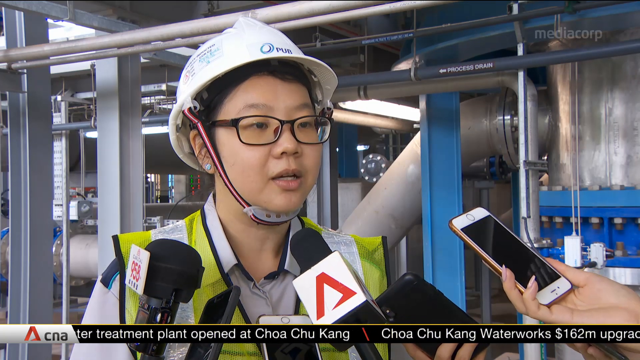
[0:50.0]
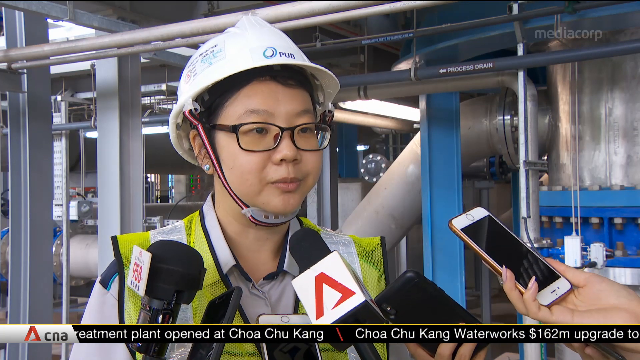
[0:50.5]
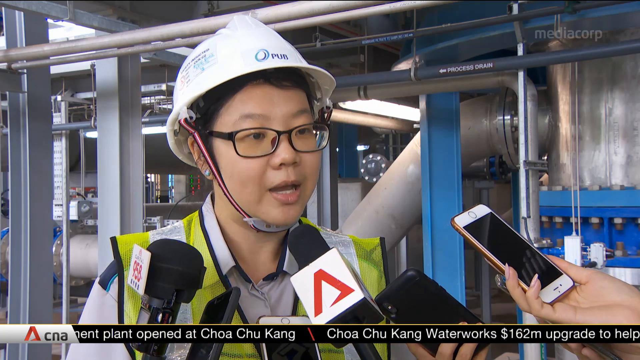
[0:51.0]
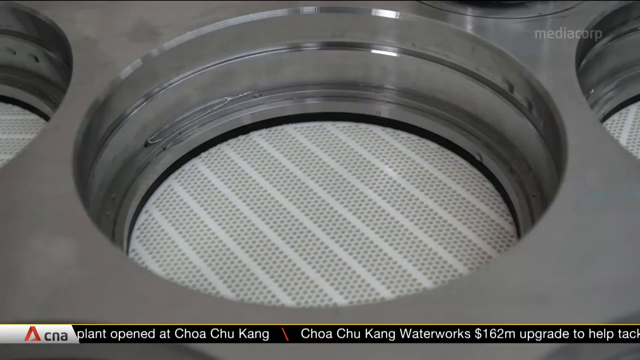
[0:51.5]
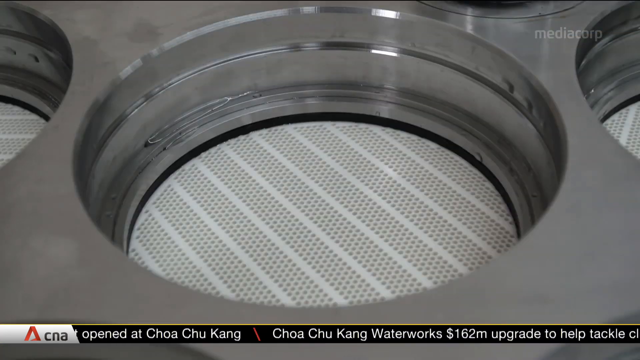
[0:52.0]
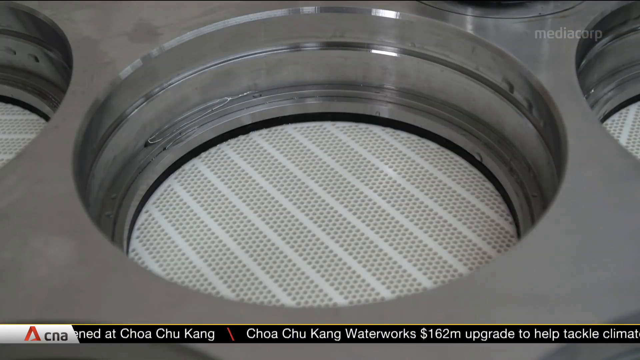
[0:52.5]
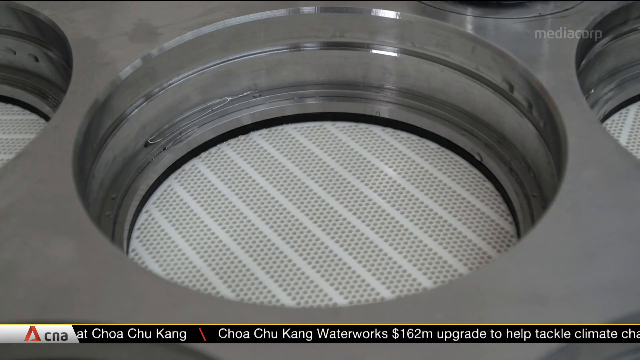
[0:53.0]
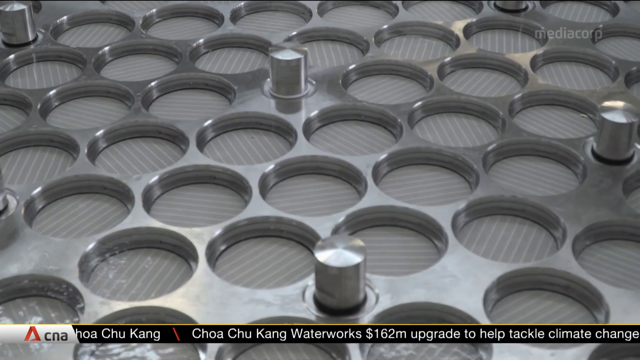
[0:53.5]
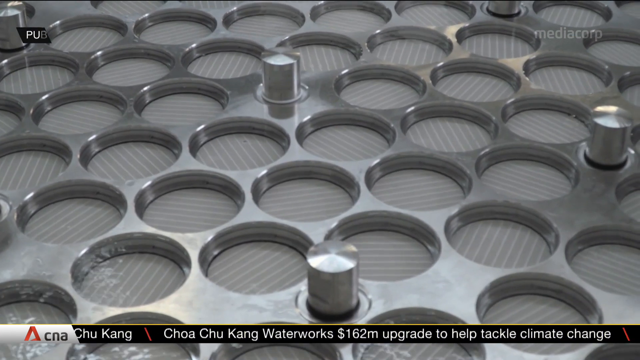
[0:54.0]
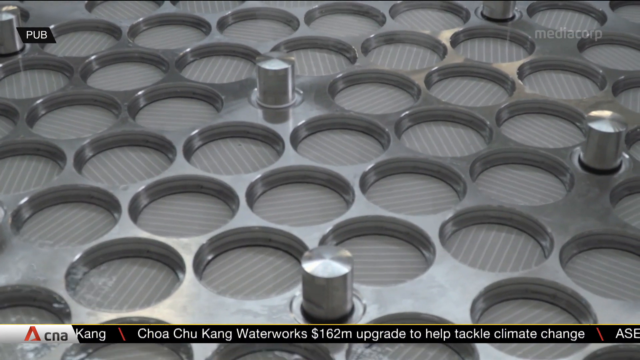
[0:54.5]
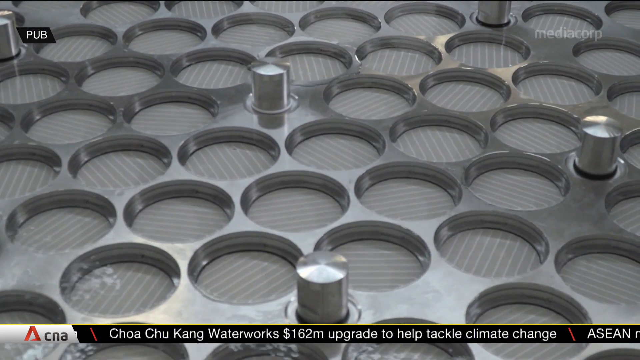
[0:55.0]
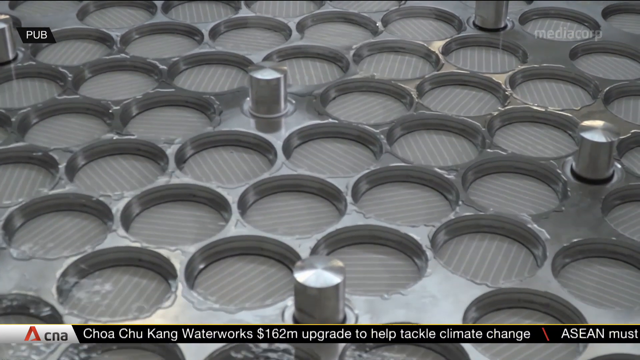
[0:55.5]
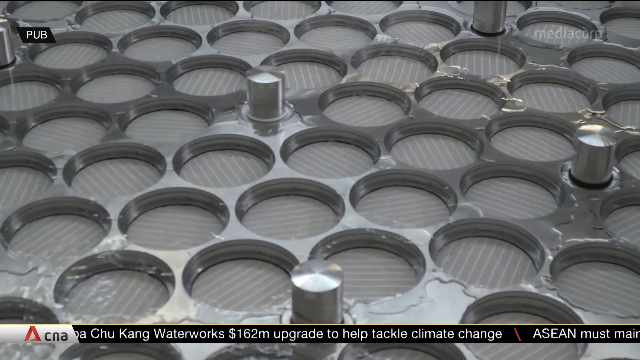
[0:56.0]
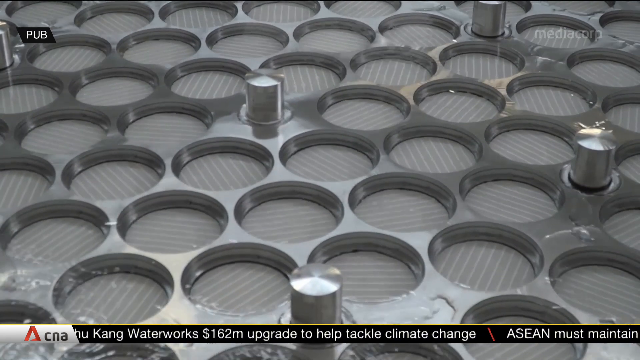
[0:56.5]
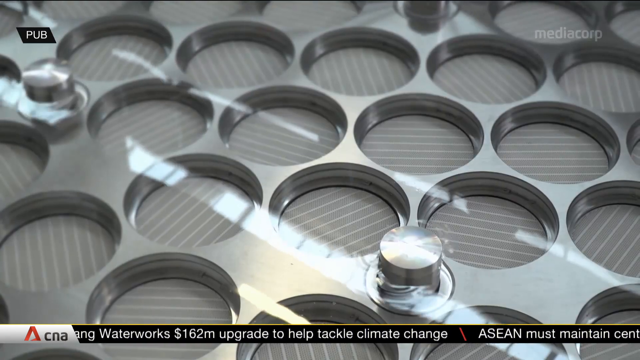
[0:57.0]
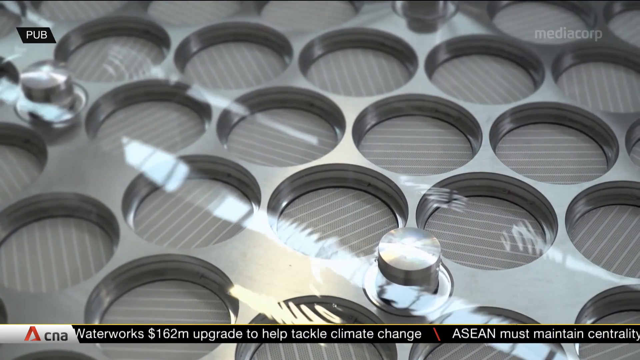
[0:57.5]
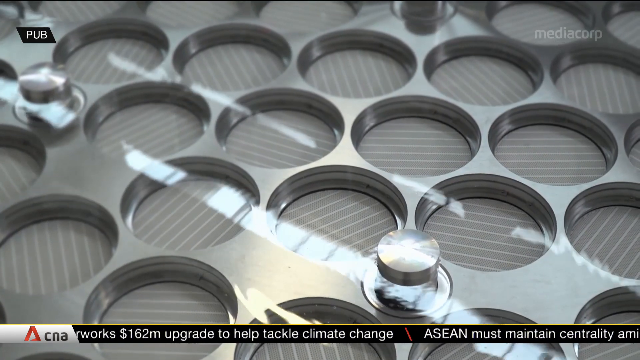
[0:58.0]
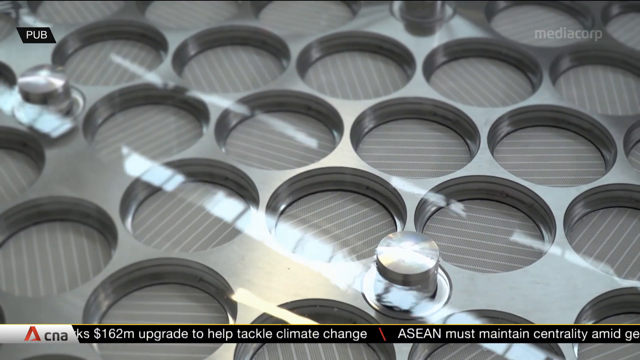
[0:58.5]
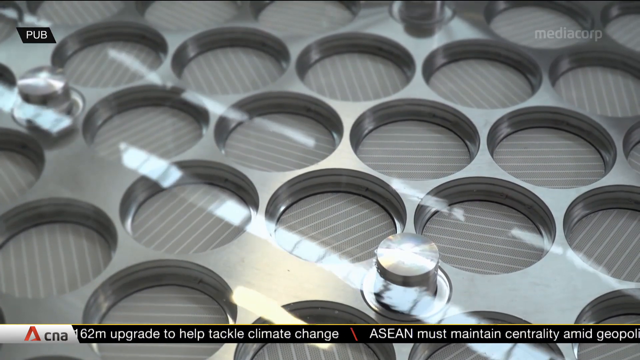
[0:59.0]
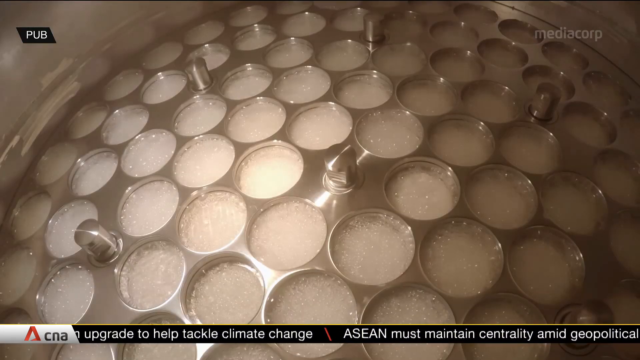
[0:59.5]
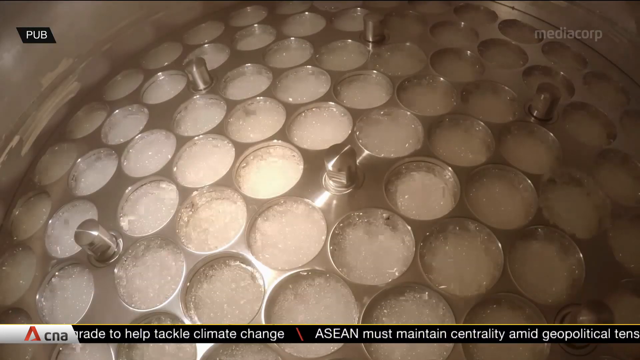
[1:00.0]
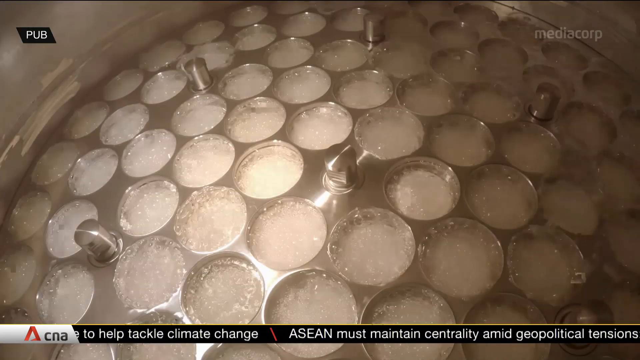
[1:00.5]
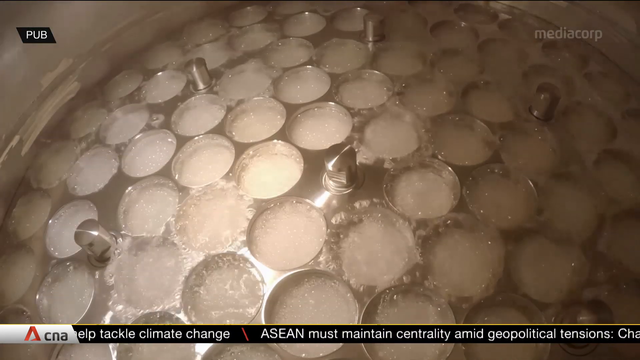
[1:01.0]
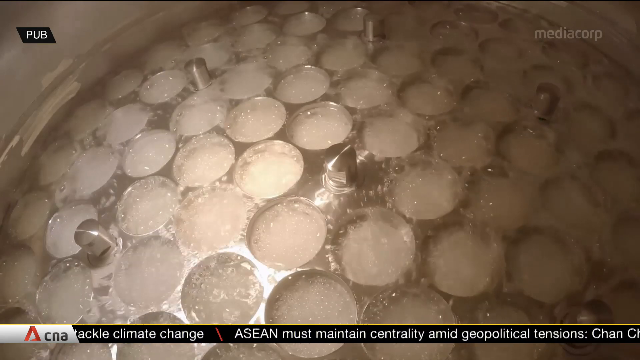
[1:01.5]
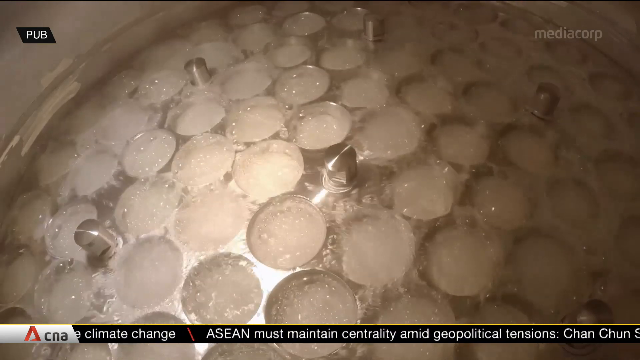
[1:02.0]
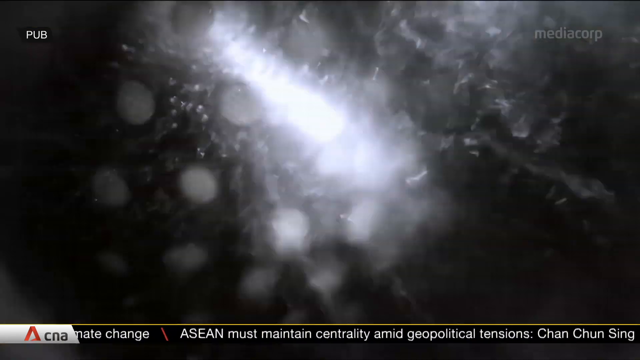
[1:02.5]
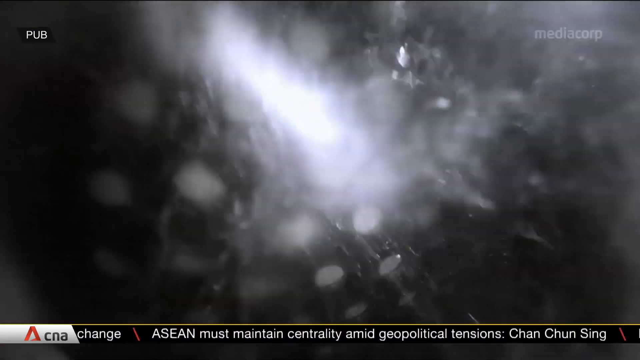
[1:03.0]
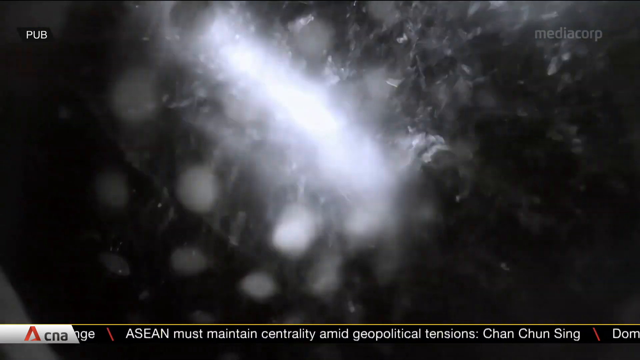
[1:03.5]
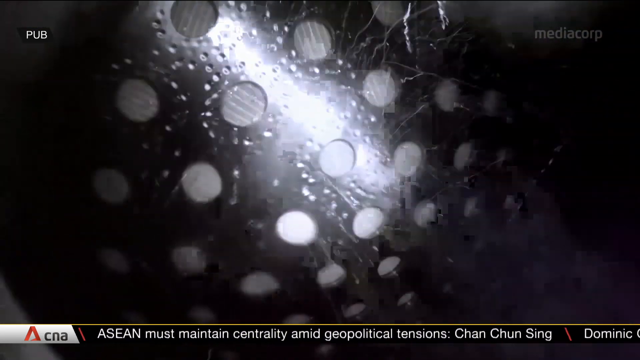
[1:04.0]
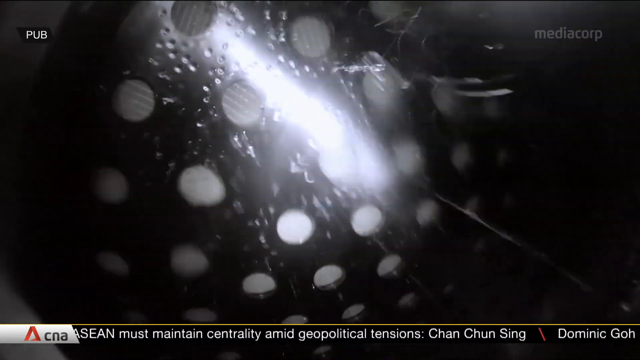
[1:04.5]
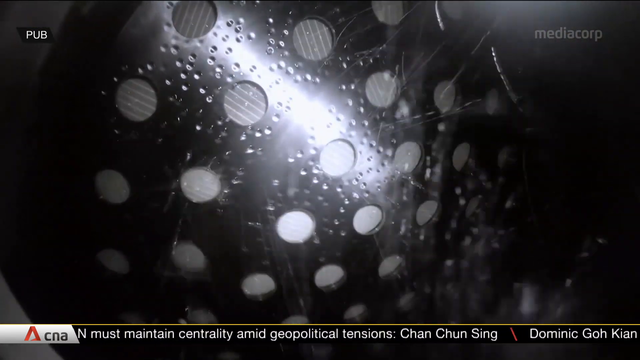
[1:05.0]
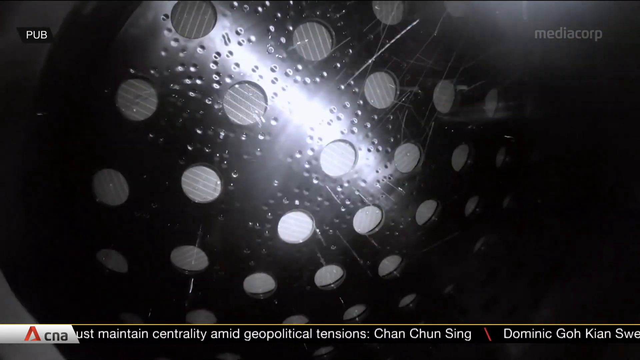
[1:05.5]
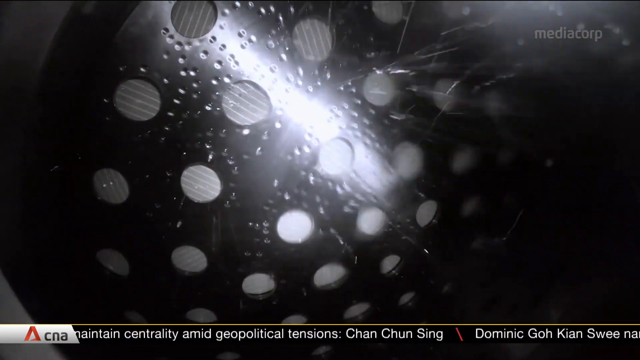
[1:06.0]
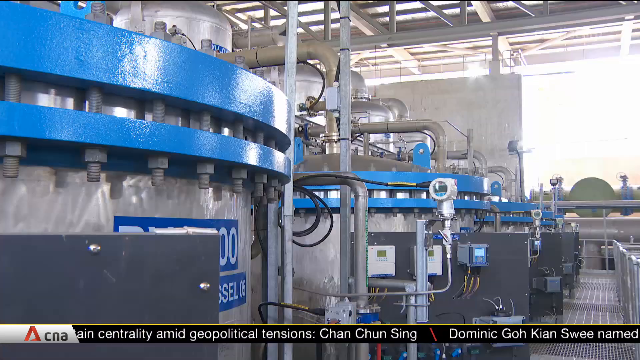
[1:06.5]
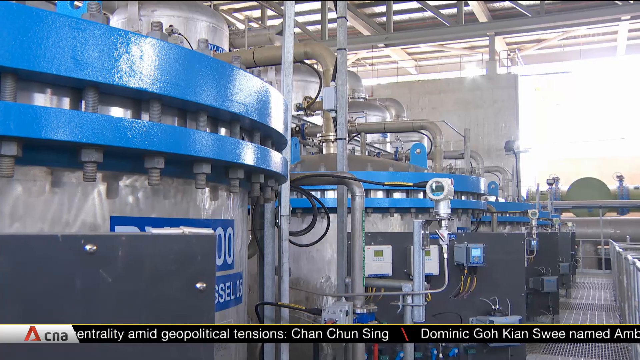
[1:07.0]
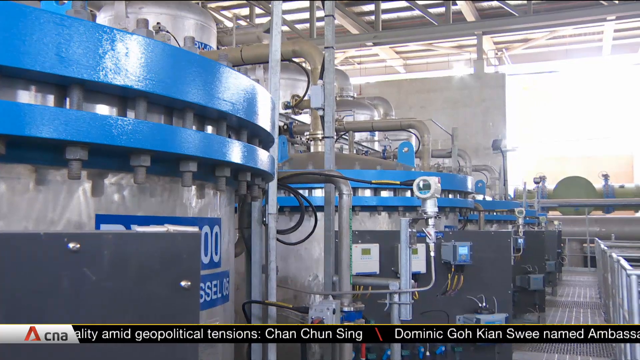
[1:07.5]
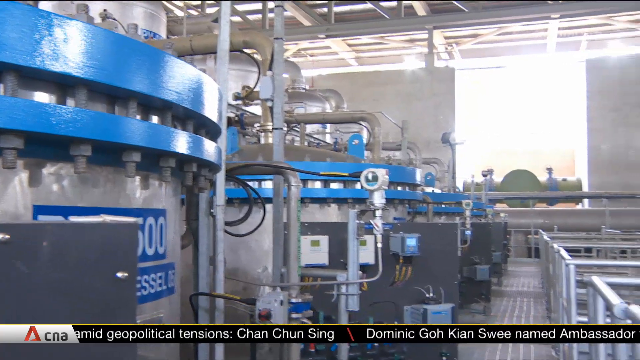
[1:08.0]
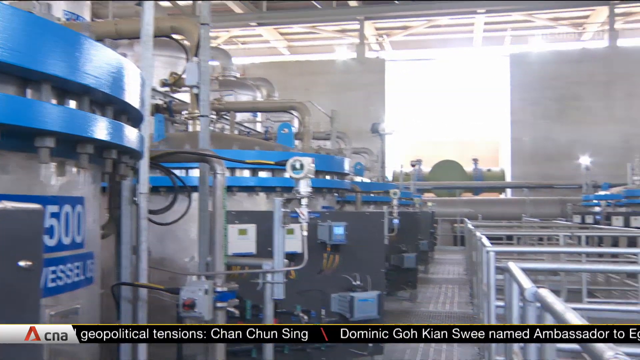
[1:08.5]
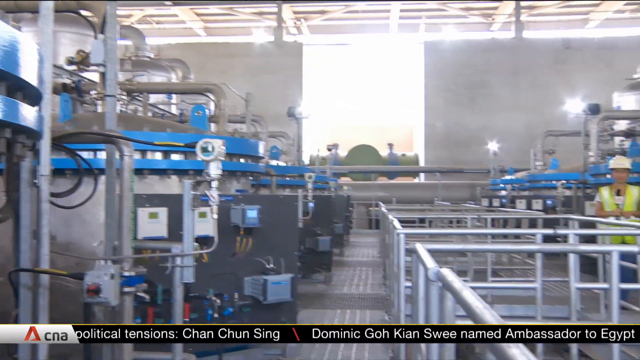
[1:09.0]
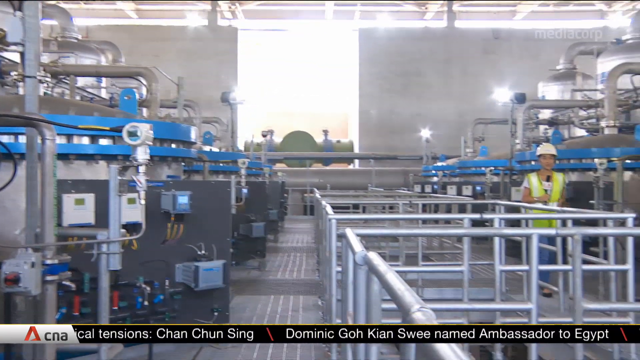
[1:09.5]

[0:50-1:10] In the waterworks, silver pipes and lots of silver girders fill the background across the left two thirds of the screen, with blue metalwork on the right. The interviewer's hand is visible in the bottom right corner, holding her iPhone toward the interviewee, Elaine, who also has two other microphones labelled with logos in front of her. Elaine wears glasses, a hard hat and a high-vis vest over her uniform, and she continues to answer questions. The video then cuts to machinery that looks like a series of metal circles cut out of a thick sheet of metal with some sort of sieve grating underneath, which fills the screen. The camera pans across it, showing water flowing into it and bubbling. Next comes another piece of machinery with water coming out of it, and then the factory floor, with a number of big metal vats and metal railings.